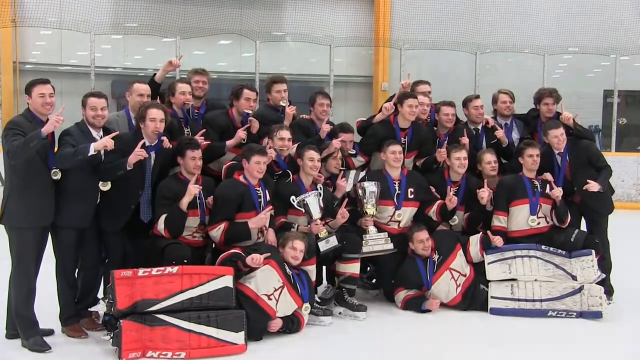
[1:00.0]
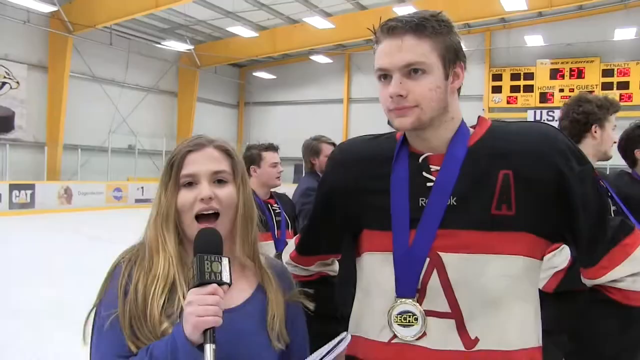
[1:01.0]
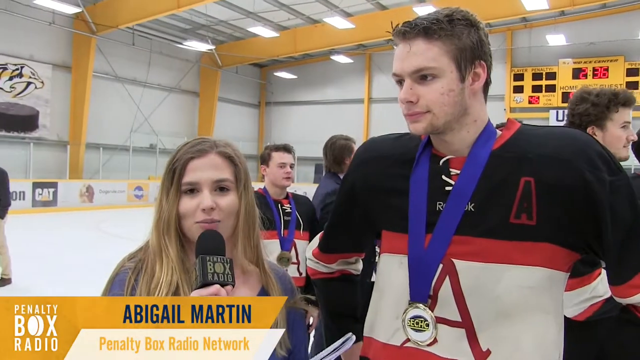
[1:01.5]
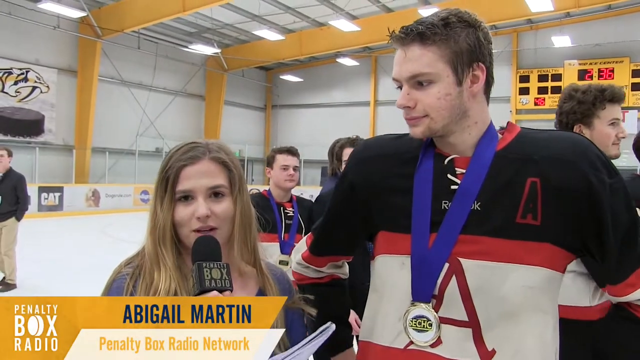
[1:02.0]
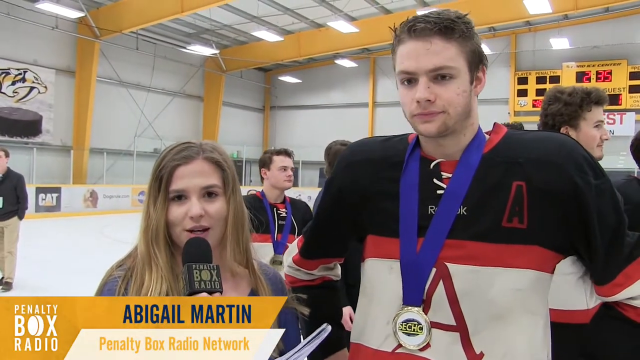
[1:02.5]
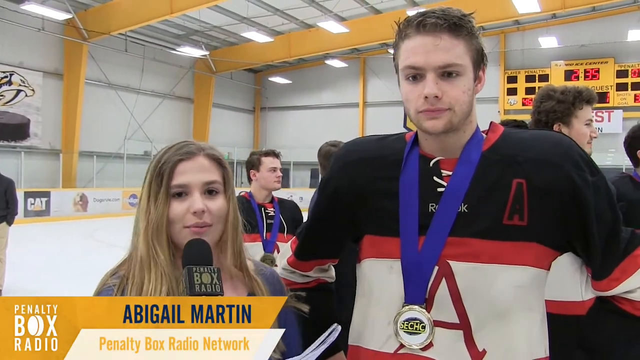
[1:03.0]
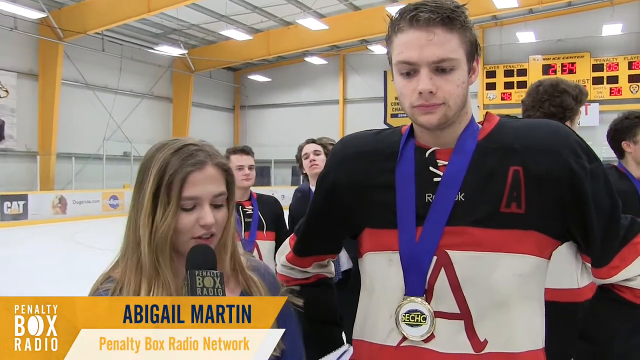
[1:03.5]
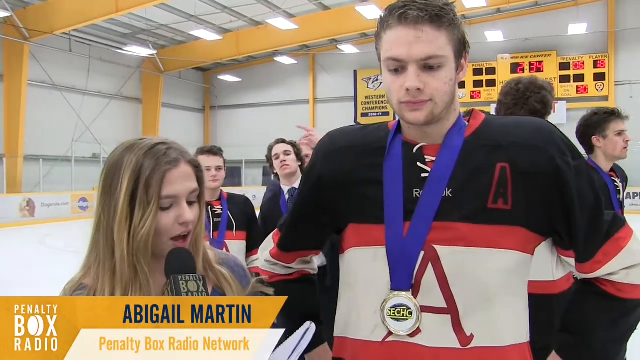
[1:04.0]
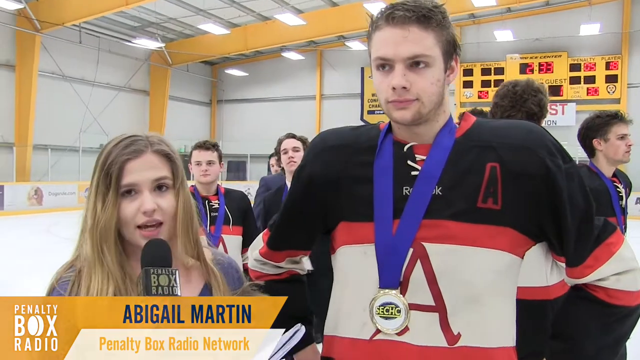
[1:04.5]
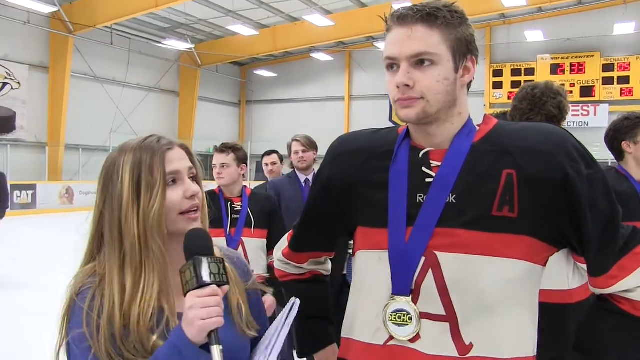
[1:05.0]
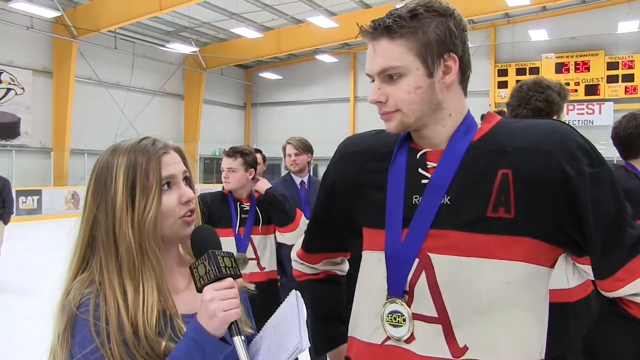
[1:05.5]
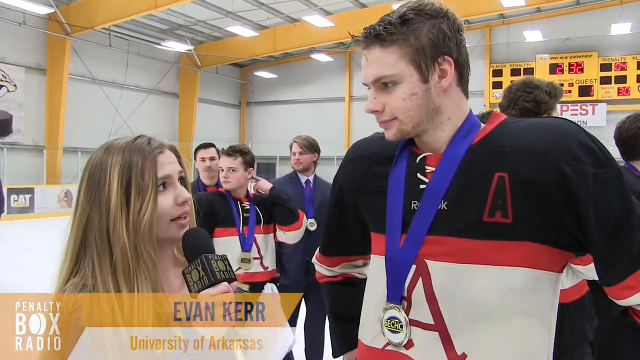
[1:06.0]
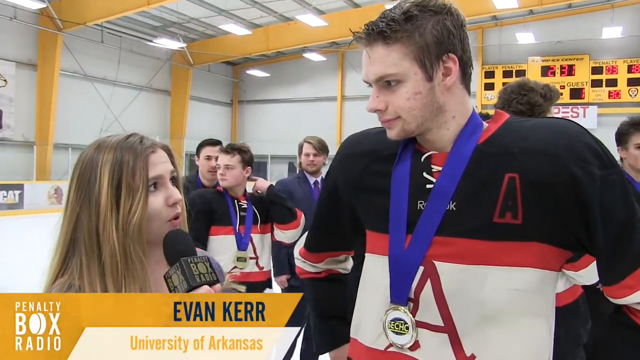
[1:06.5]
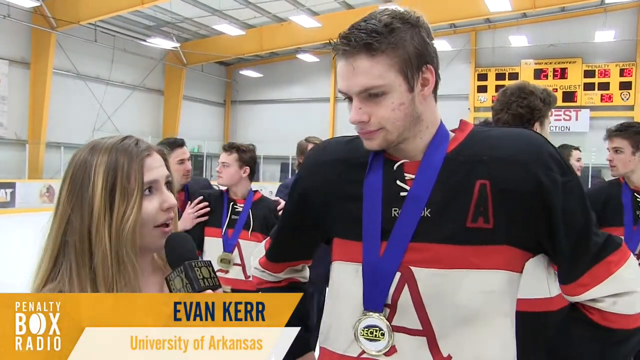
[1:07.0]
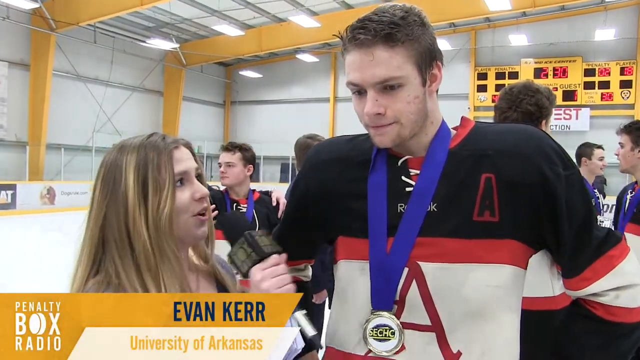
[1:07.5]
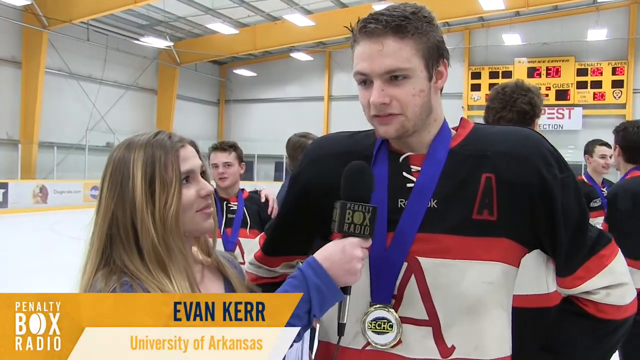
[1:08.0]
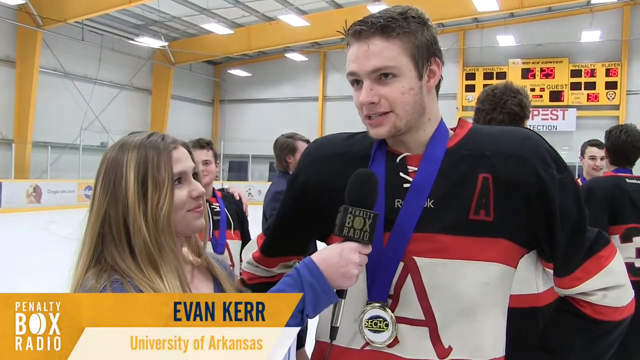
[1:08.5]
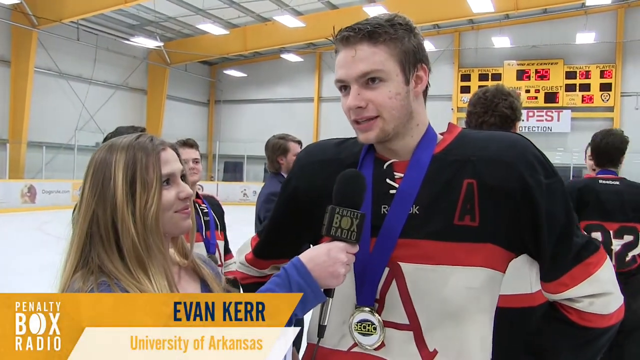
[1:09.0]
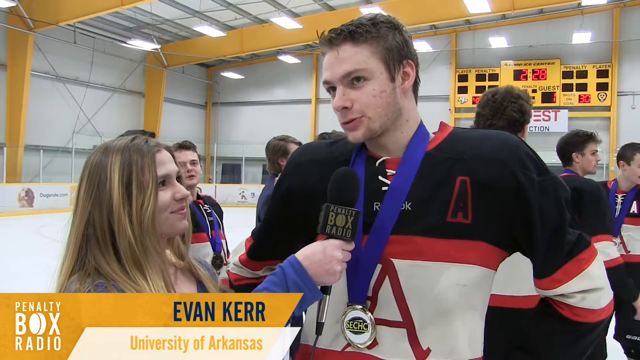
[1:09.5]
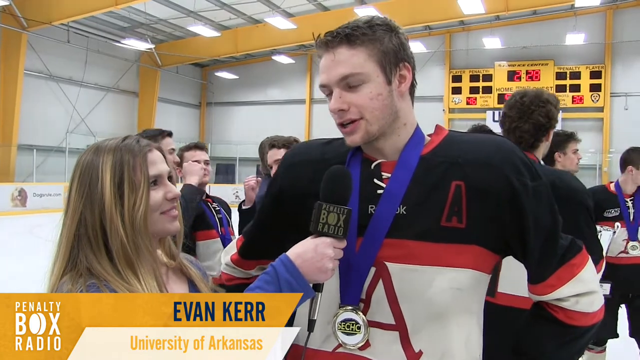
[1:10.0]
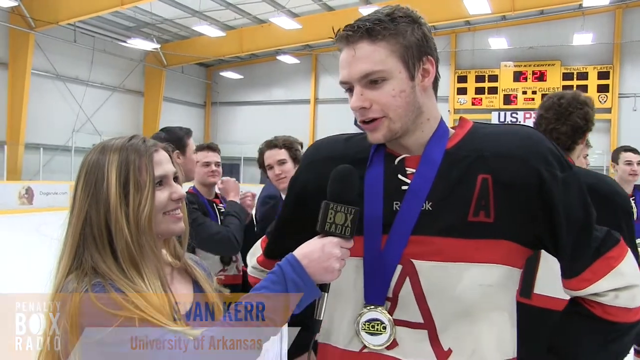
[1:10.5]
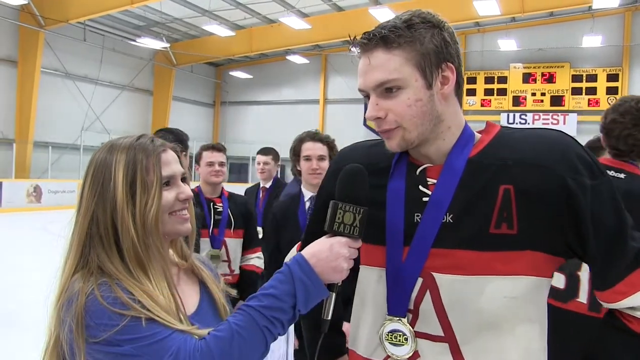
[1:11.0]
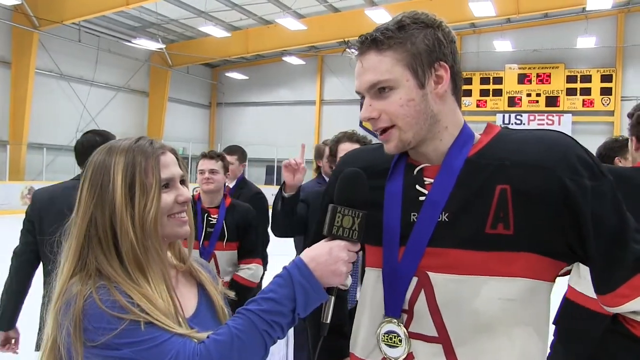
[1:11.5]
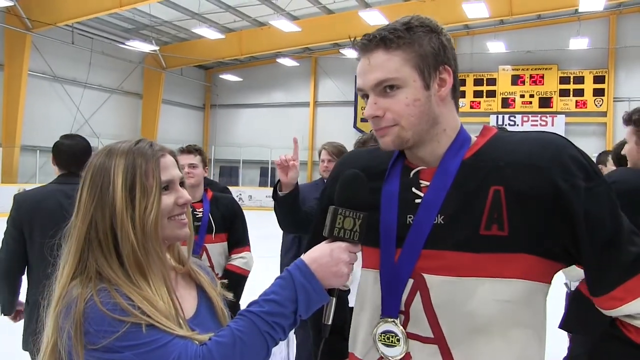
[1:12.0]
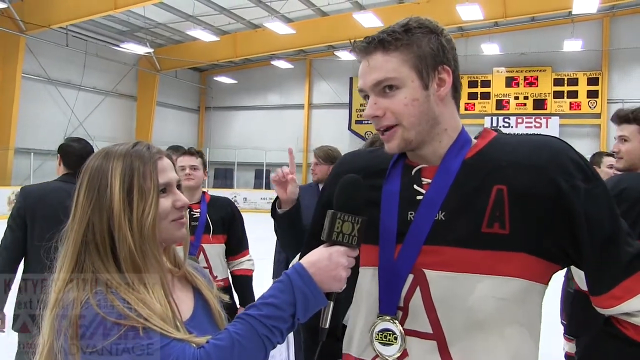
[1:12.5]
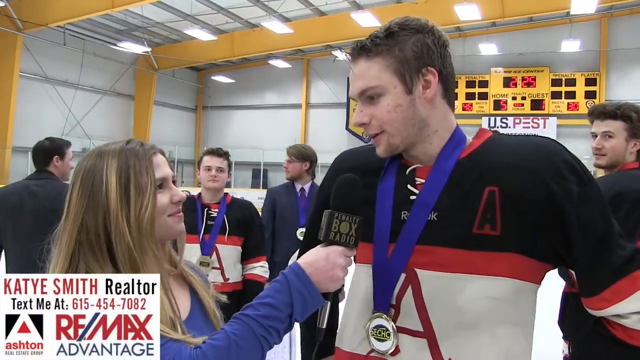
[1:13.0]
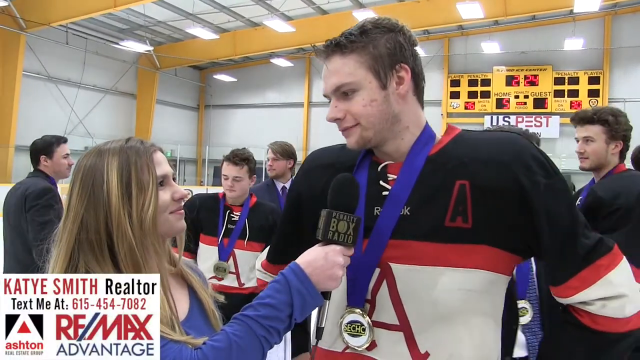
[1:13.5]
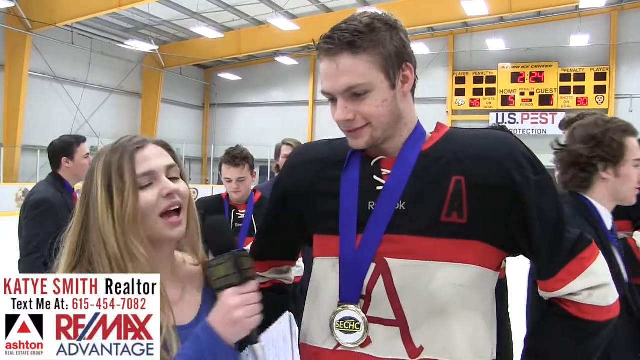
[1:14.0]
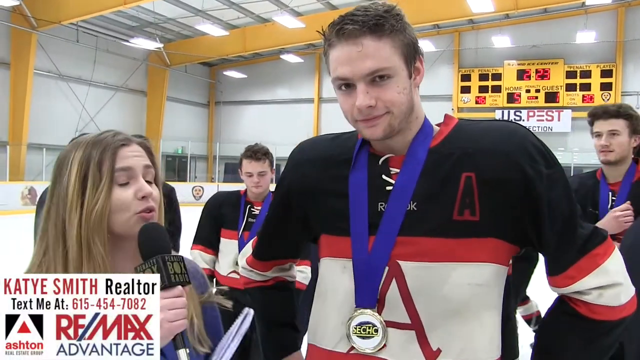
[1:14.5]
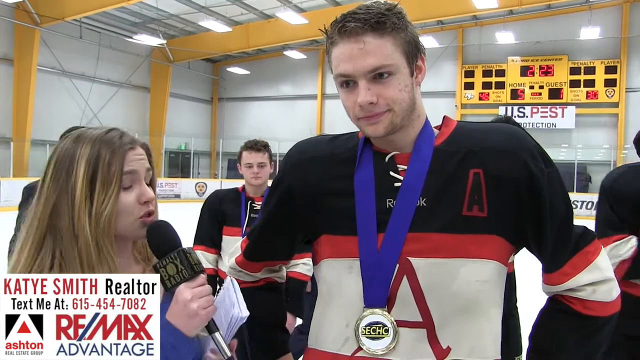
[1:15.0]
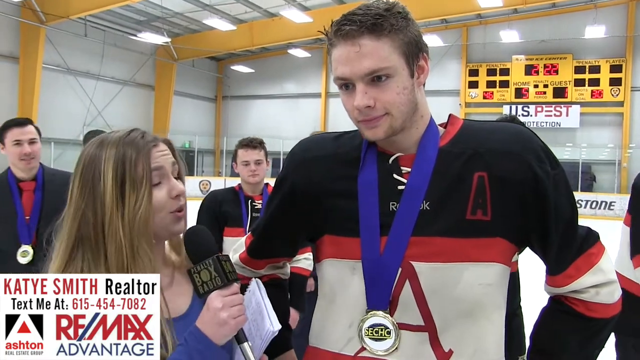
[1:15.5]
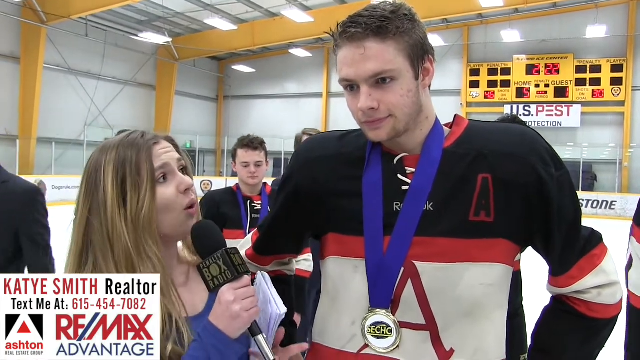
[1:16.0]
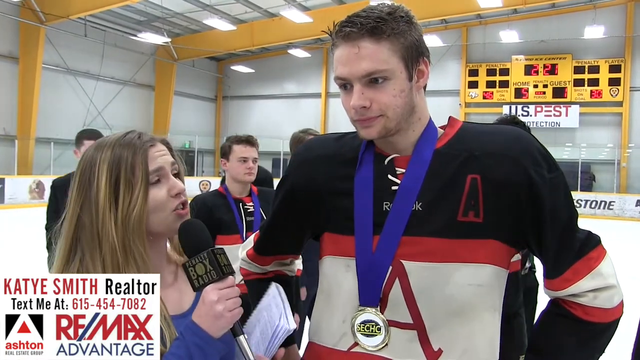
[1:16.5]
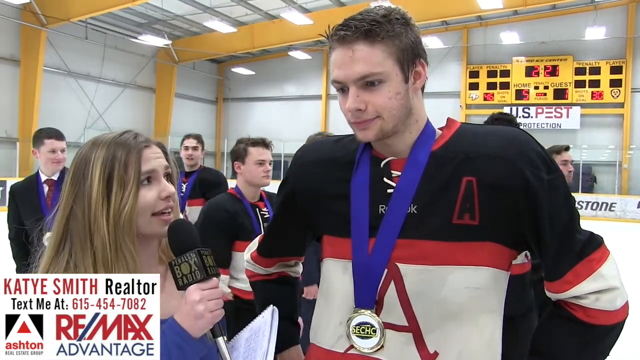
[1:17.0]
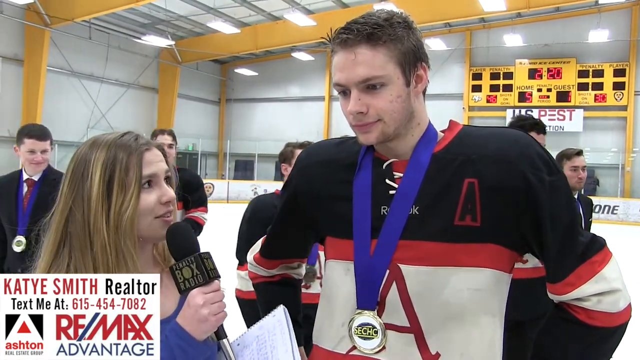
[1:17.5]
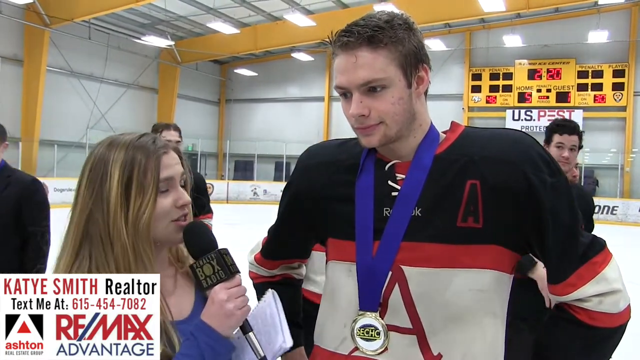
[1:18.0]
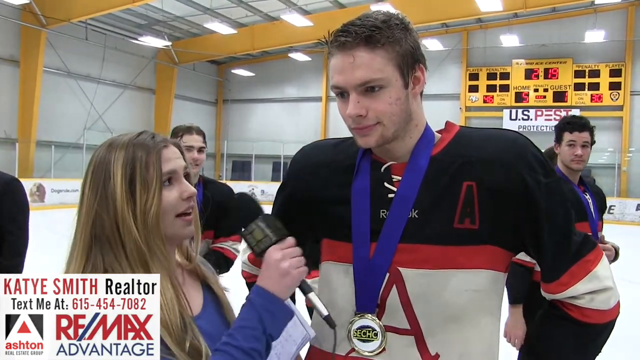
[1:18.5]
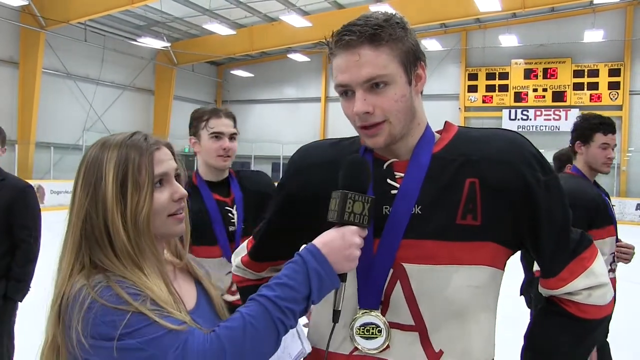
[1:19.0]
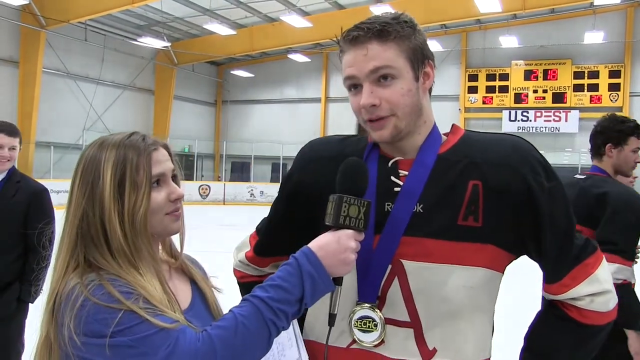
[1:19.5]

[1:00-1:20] Hockey players are interviewed by Abigail Martin; one player is named Evan Kerr. In the bottom left-hand corner of the screen, text reads "K.E. Smith" and "Rima Aksibanj". The players, who are Caucasian, appear very happy about their victory, with other hockey players in the background. Many of the players have the letter A on their jerseys and a red letter M on a white background.